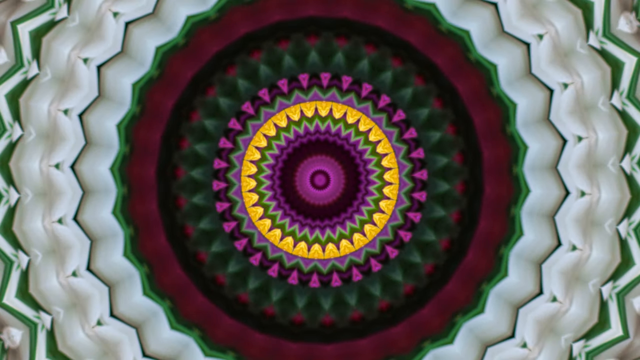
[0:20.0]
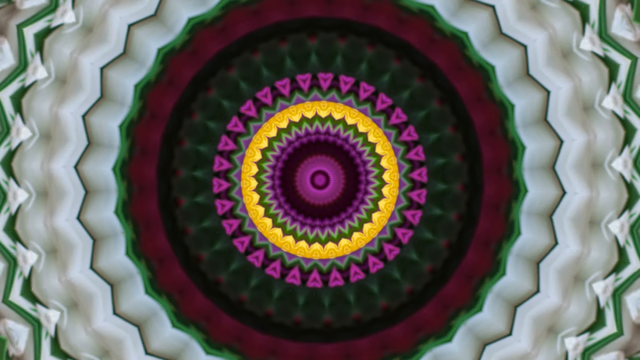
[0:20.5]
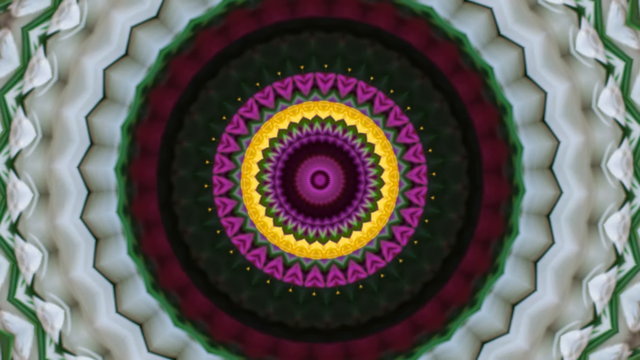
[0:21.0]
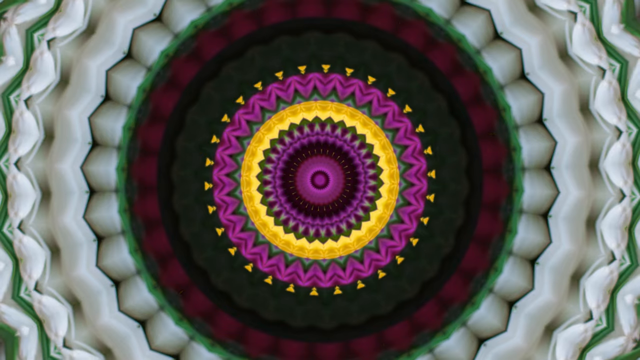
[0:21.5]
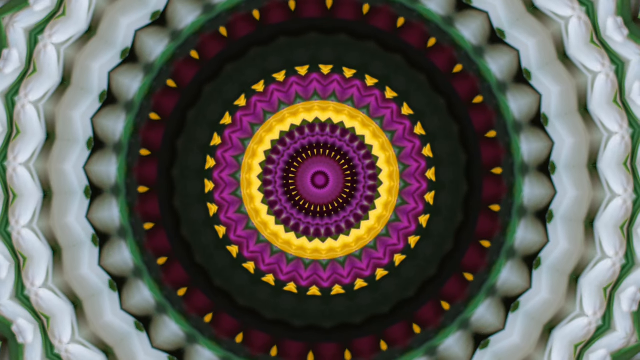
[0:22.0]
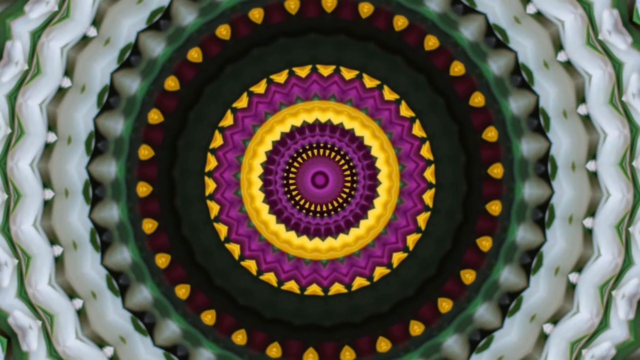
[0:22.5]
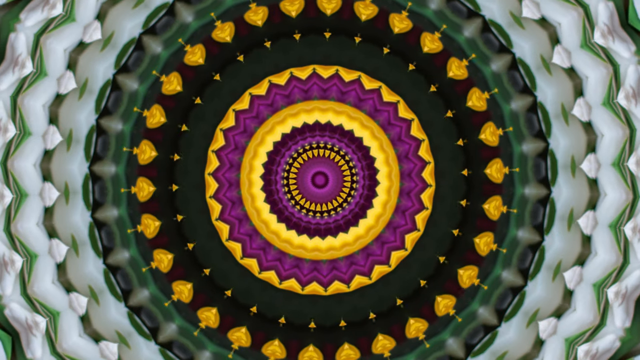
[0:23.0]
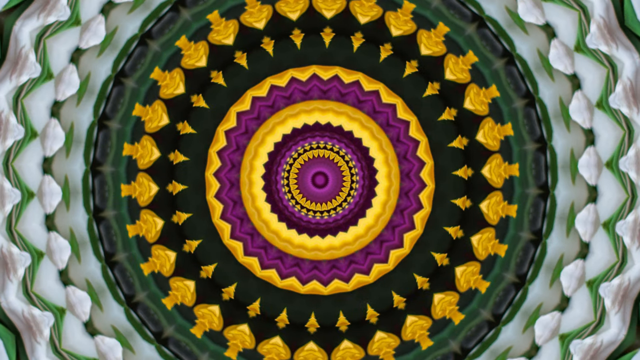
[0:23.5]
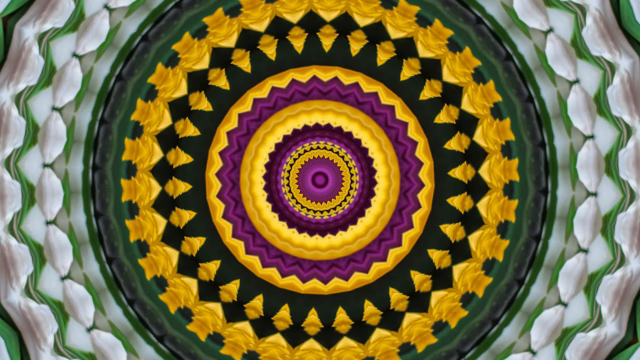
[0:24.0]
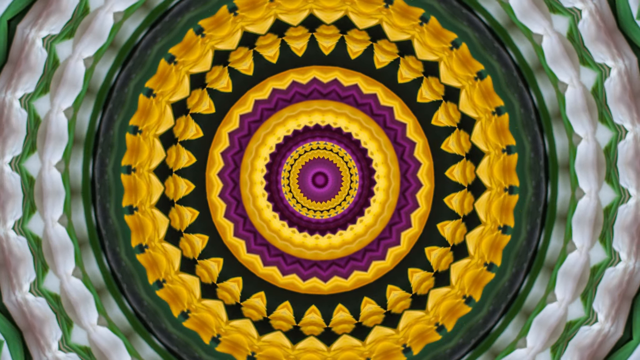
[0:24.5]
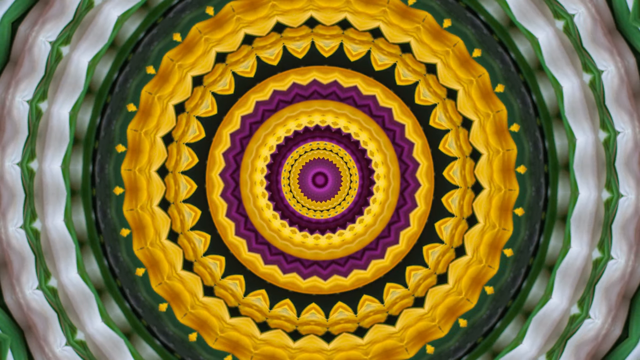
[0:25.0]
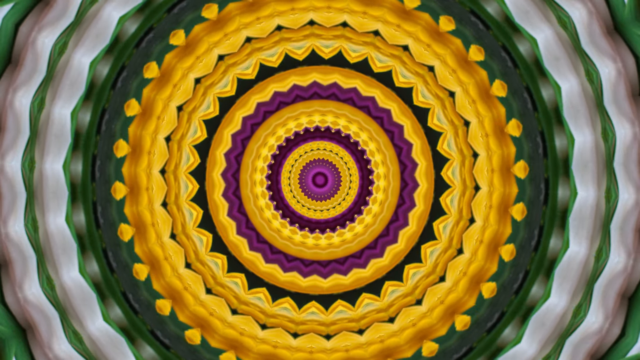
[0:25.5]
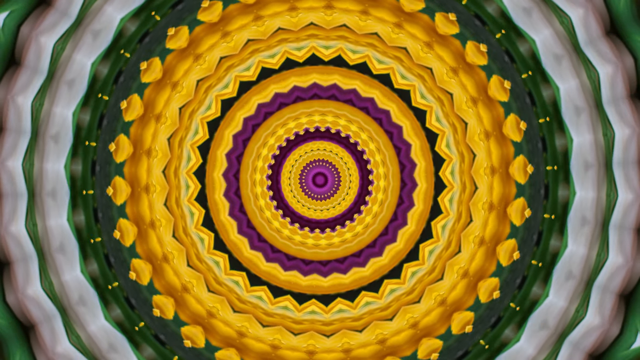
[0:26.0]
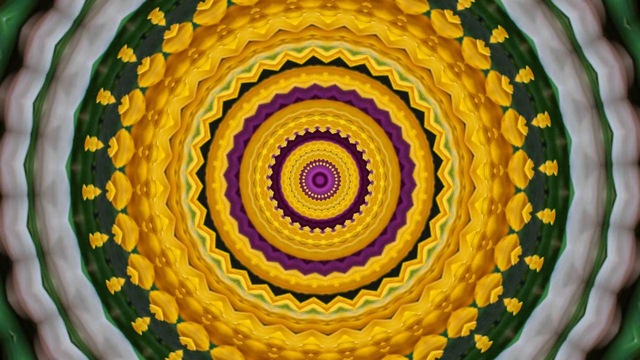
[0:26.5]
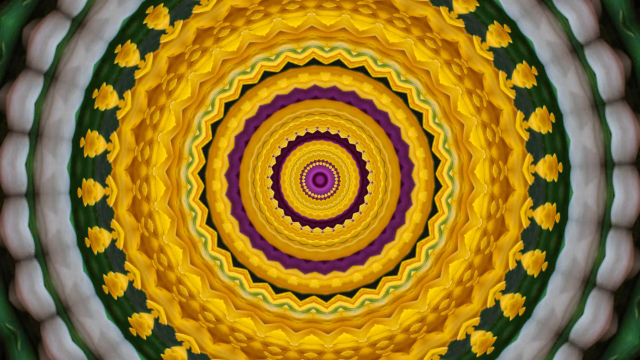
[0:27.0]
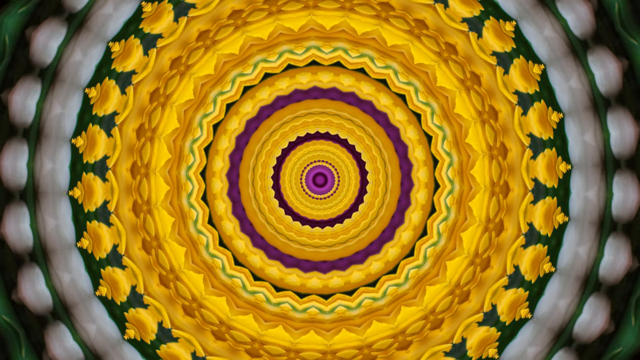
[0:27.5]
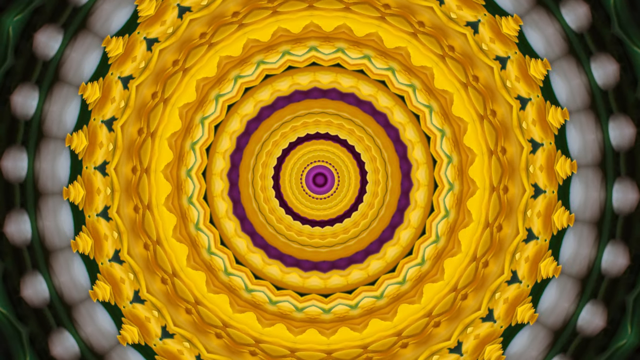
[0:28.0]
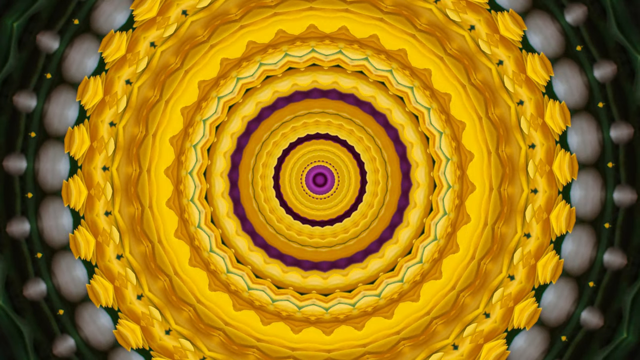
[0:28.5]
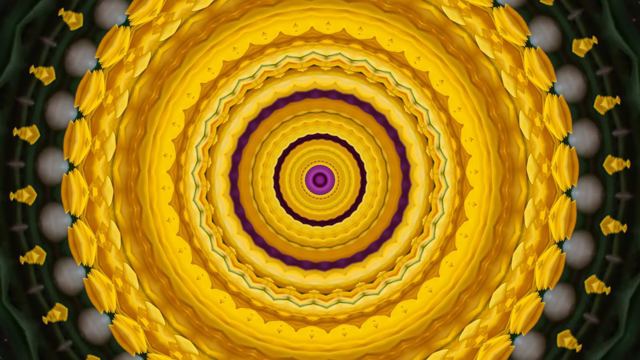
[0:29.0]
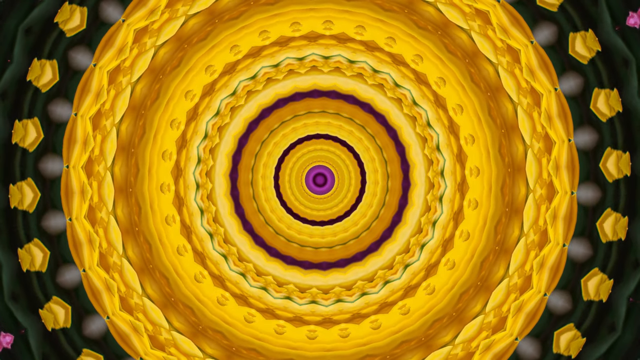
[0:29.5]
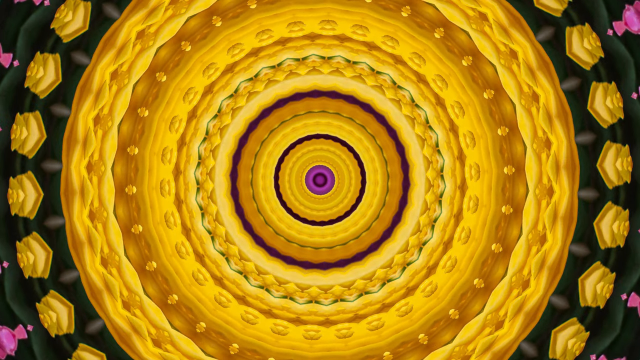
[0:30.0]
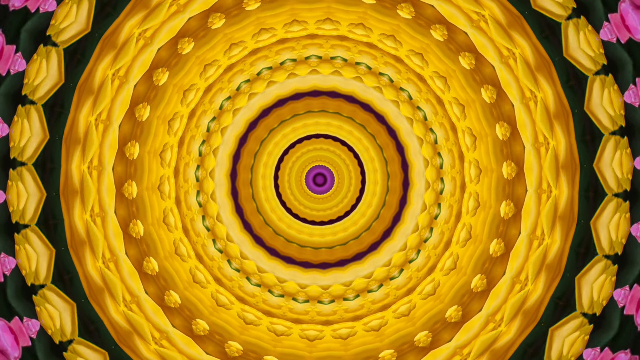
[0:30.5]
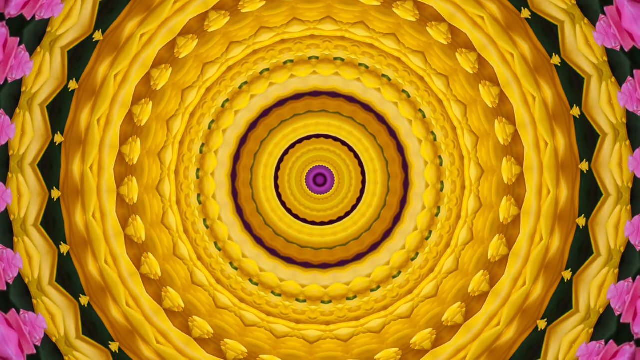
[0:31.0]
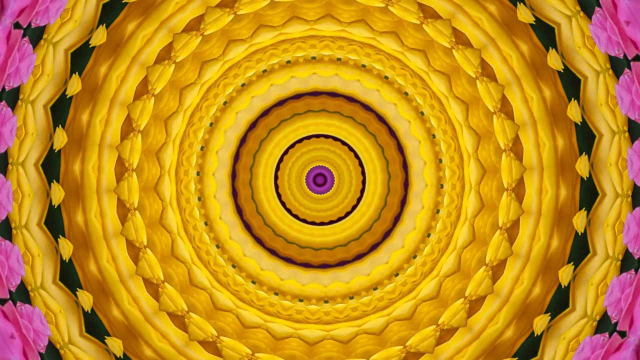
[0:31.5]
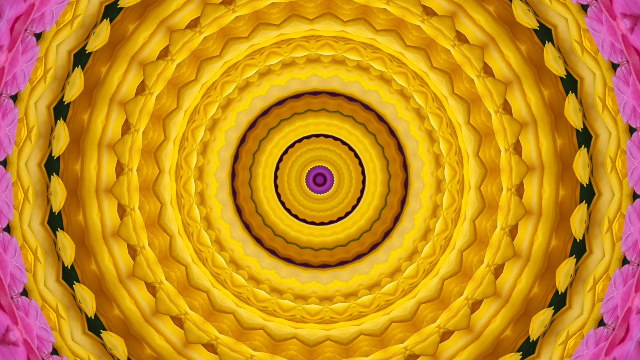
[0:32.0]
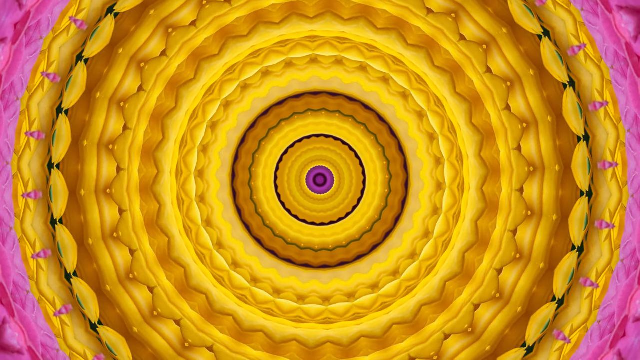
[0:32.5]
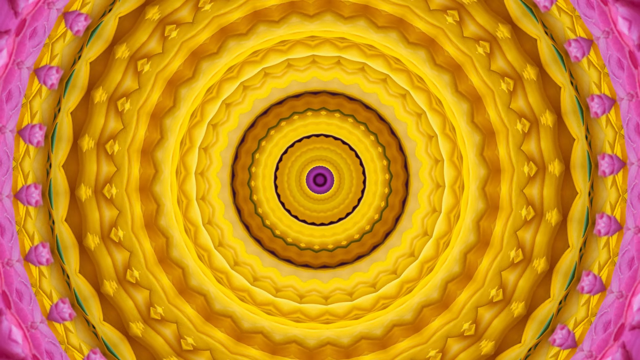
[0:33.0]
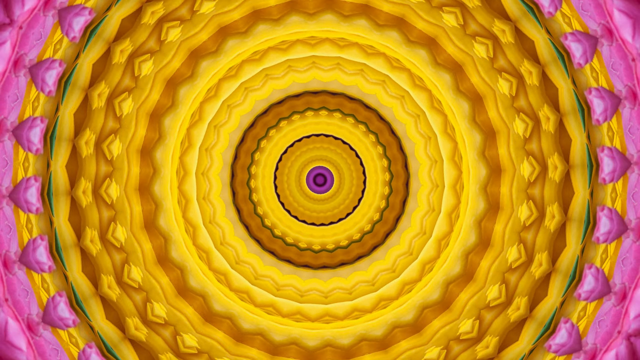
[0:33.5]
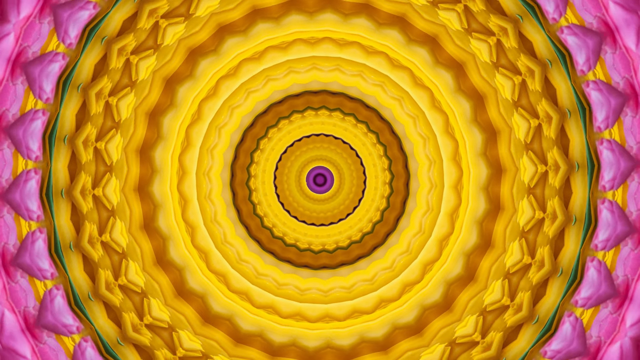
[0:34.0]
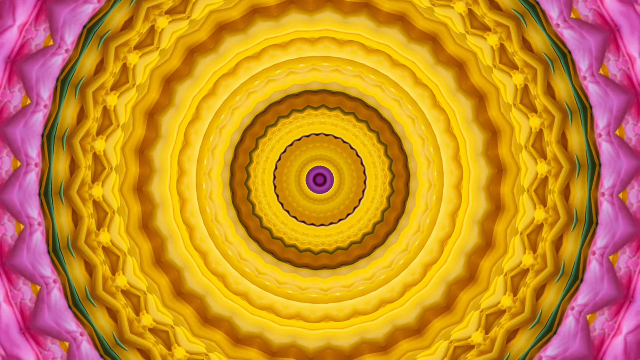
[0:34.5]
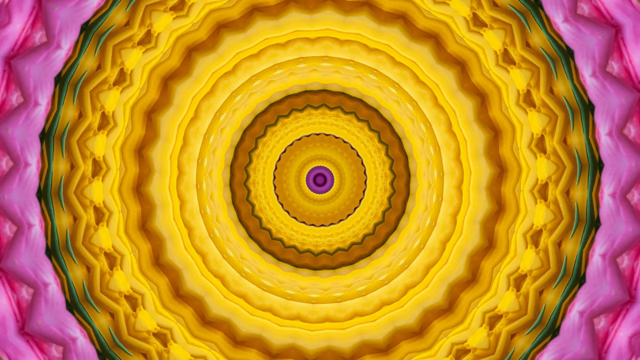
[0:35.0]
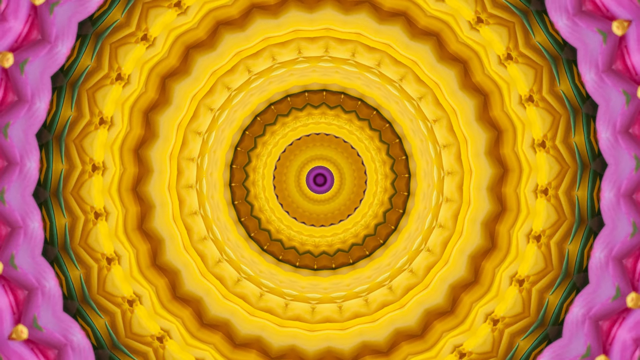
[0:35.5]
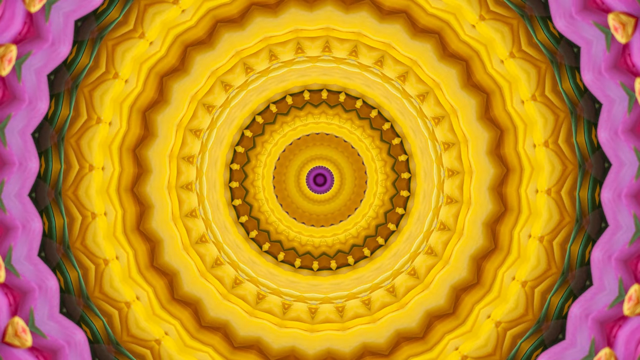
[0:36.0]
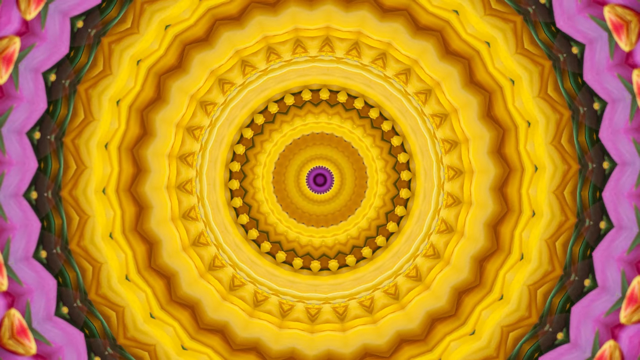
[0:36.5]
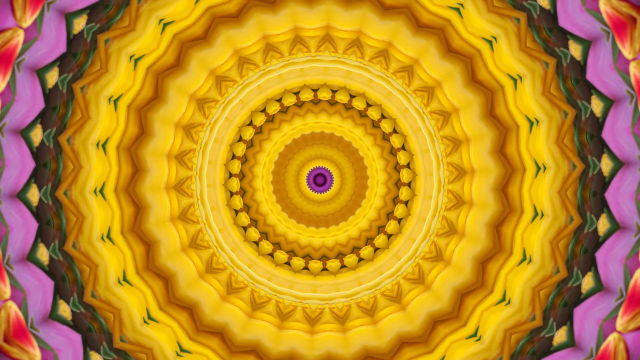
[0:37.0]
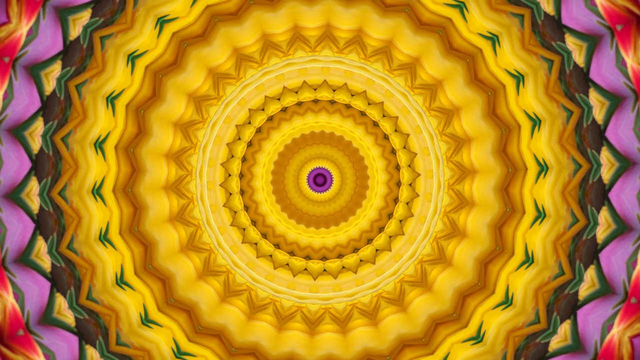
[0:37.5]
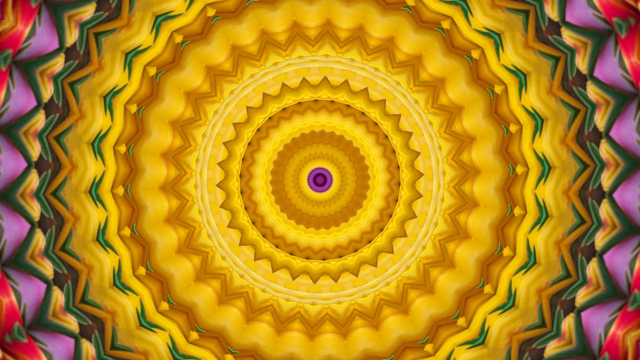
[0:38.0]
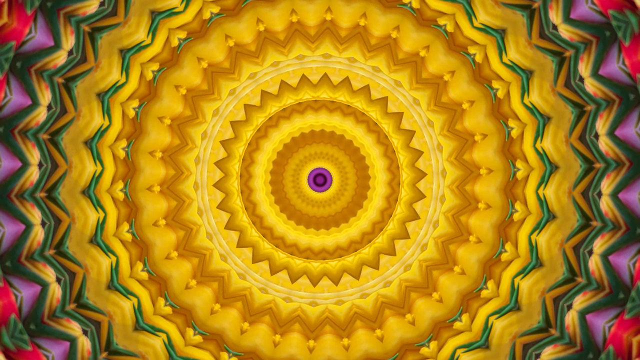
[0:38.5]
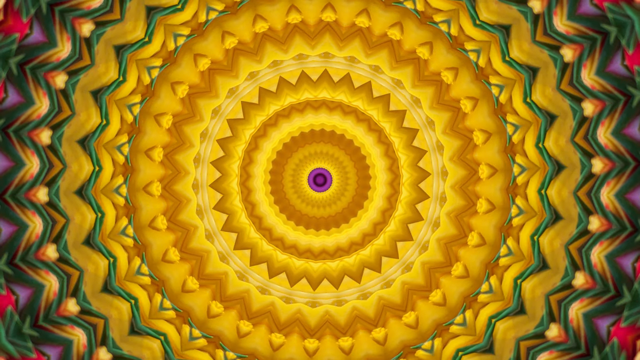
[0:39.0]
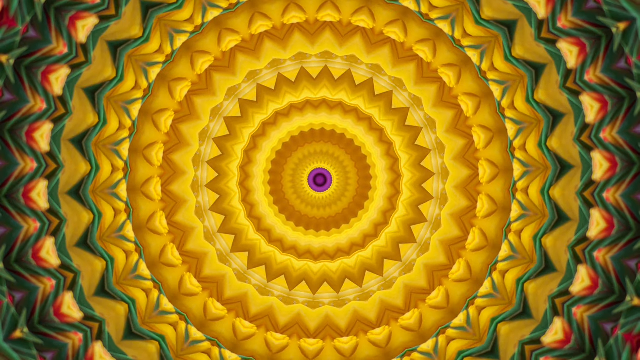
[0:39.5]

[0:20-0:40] The center of the image is purple, surrounded by various other colors. The inside of the circle seems to keep getting smaller and smaller. Yellow and golden colors overtake most of the circle, while the center part stays purple. The designs on both sides of the circle are symmetrical and move at the same time. Arrow shapes appear to be coming out of and into the circle. A pink ring that somewhat resembles flower petals begins to appear on the outside, while some green rings start to appear, followed by some red. The lines around the circle keep getting more intricate and are very decorative, and the designs almost look mandala-like.